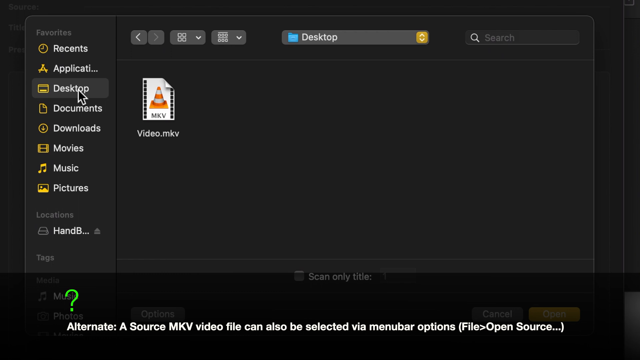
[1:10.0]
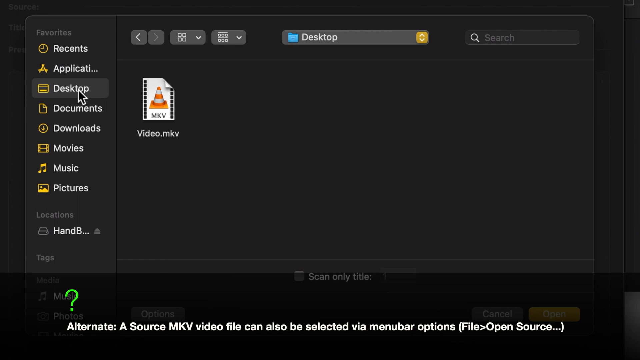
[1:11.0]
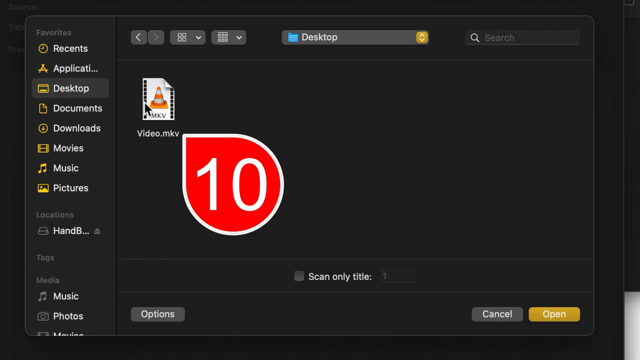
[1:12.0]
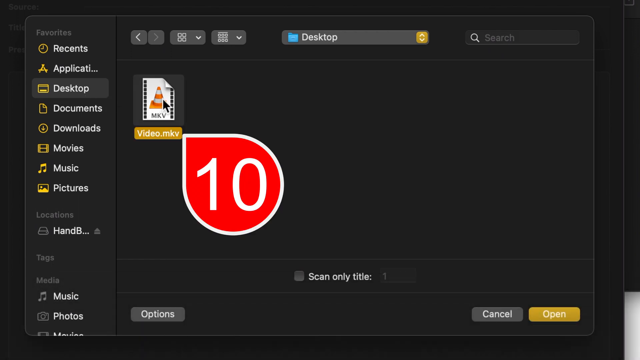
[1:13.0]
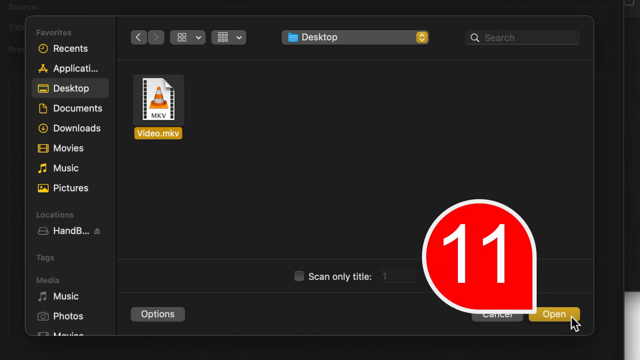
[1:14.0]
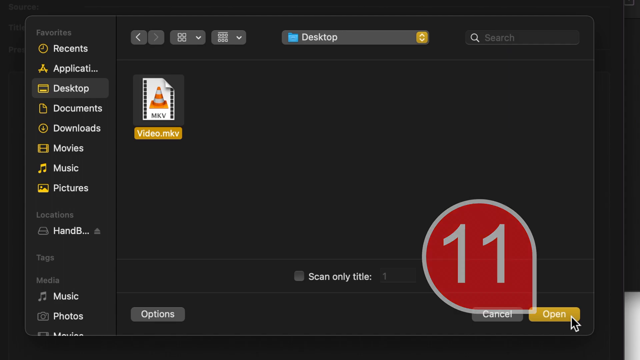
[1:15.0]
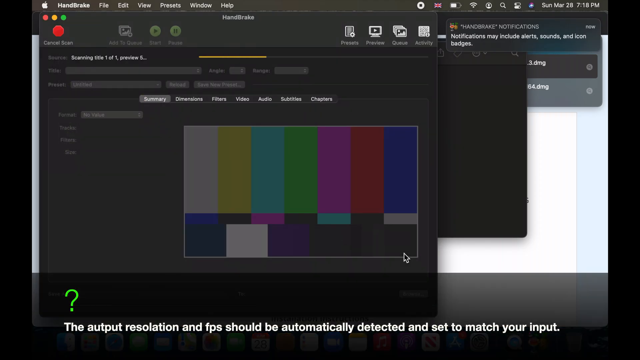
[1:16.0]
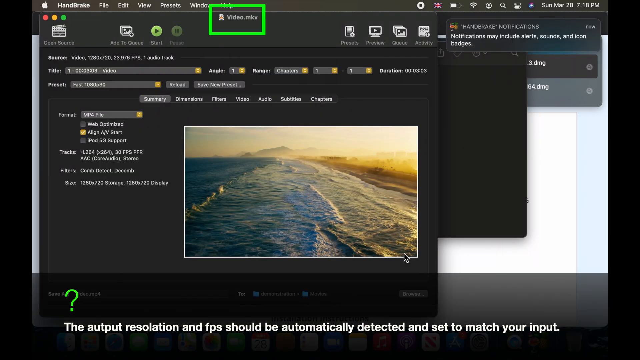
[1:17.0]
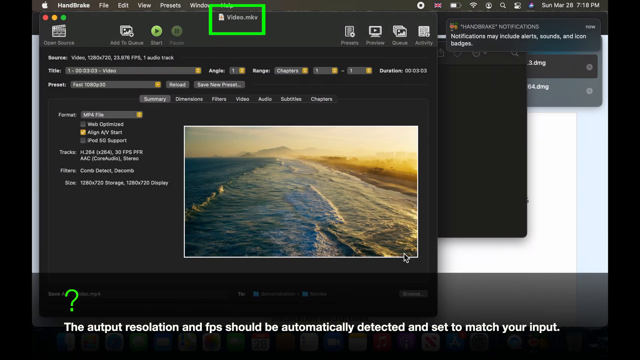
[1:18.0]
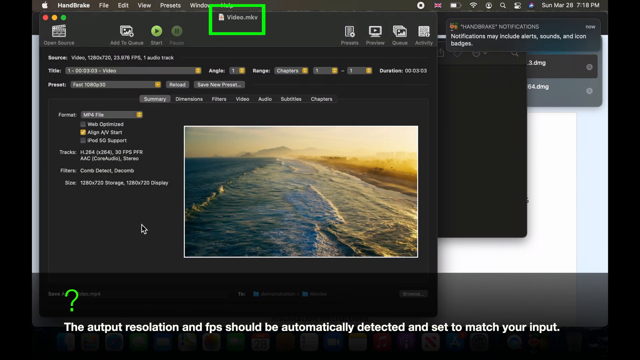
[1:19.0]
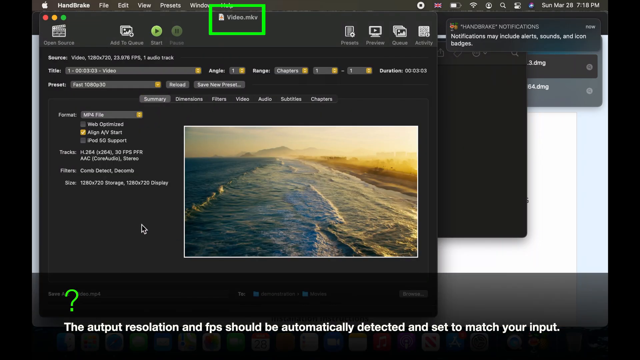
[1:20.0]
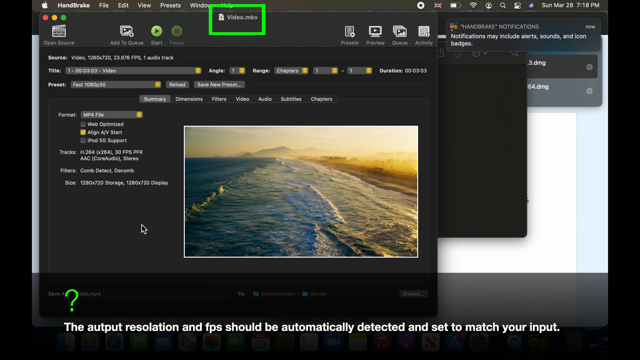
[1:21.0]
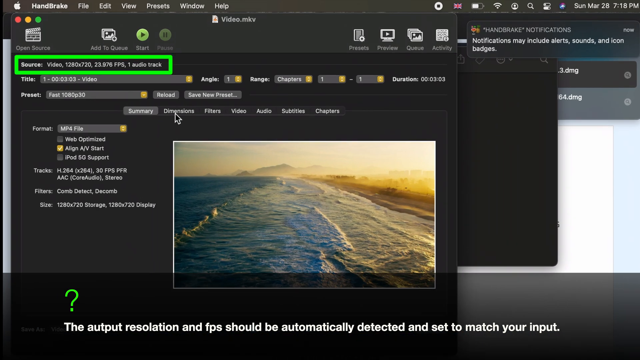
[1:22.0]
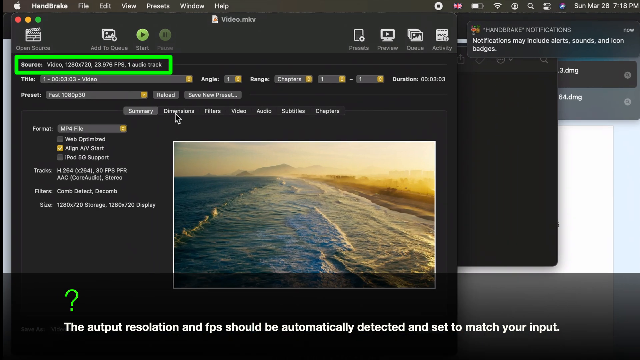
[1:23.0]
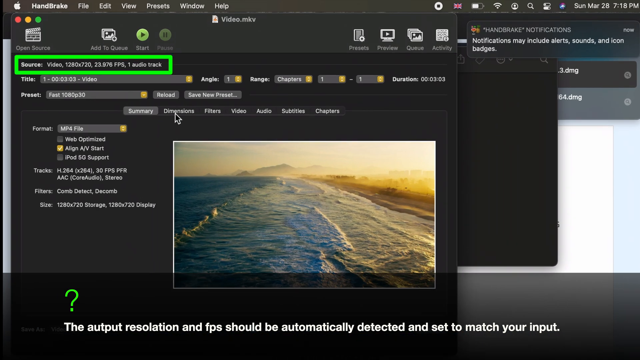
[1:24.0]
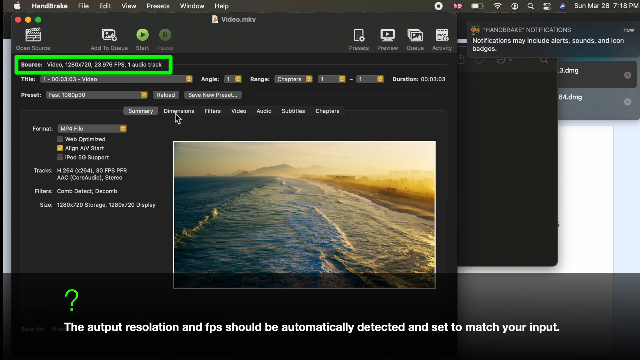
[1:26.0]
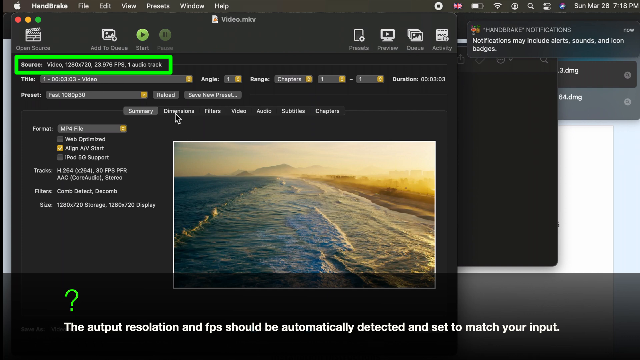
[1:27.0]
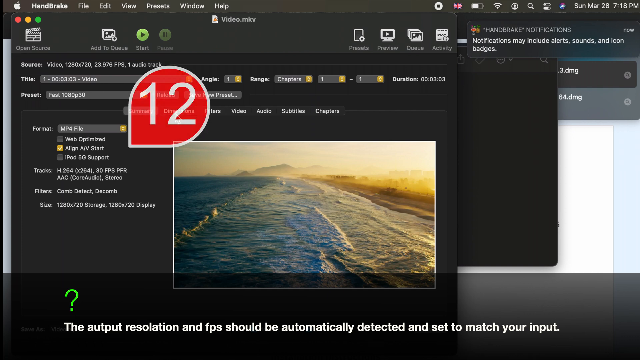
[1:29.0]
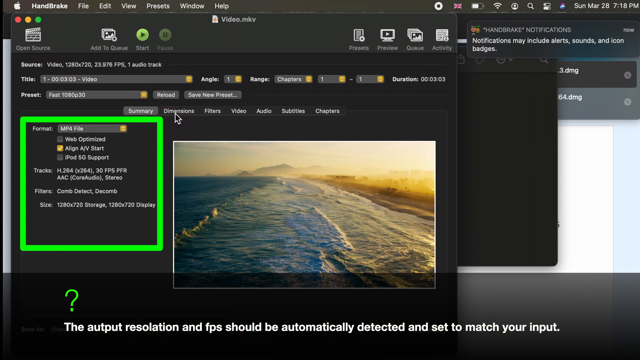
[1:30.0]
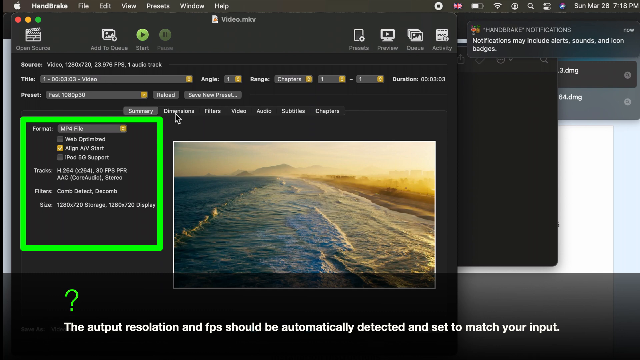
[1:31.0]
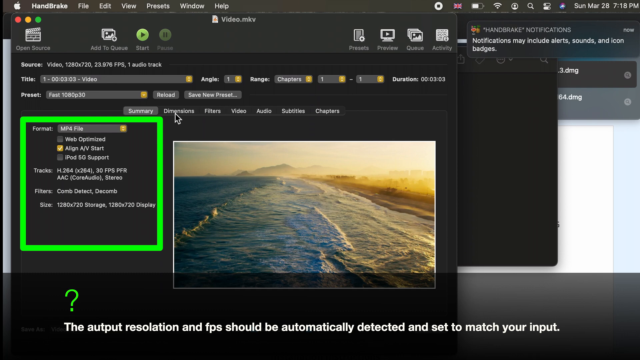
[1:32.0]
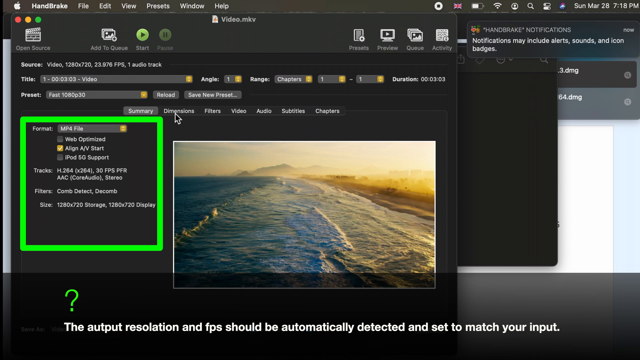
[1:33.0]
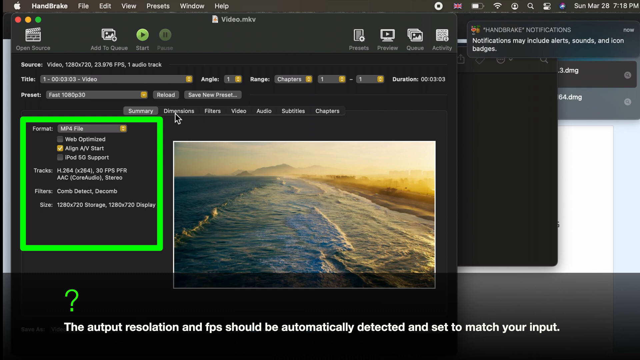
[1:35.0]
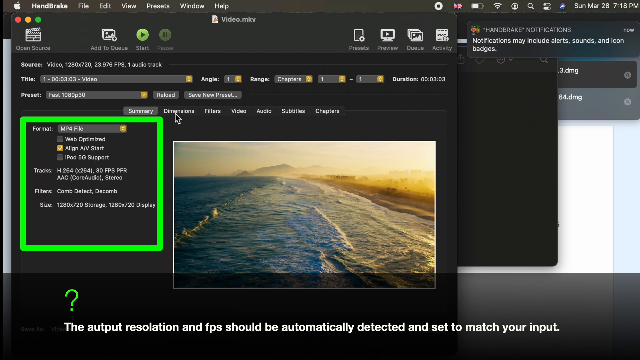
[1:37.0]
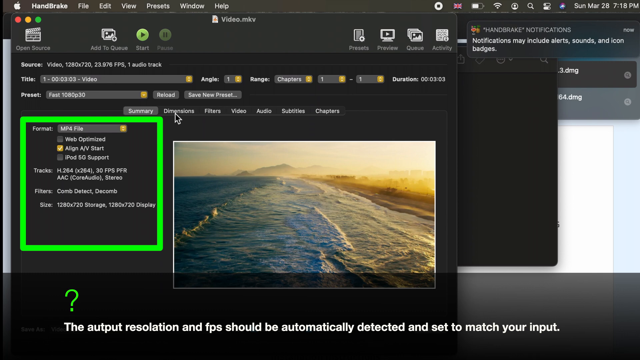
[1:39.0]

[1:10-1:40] On a black screen that looks like some kind of desktop, there is a symbol that looks like a file, with a traffic cone on a white background, labeled "video.mkv." A red bubble with 10 on it pops up, and someone clicks on the file. A red bubble with a white 11 pops up. The screen then changes to what looks like a software program with the file loaded, showing a still image of something like the ocean. A green bar outlines the file name "video.mkv," and the source is also outlined, though its text is not legible. The screen stays like this for a bit. In the lower area there is a question mark with text about the resolution and FPS being set automatically, ending "set to match your input." Then the outline of a green rectangle pops up over part of the software, covering something unclear.